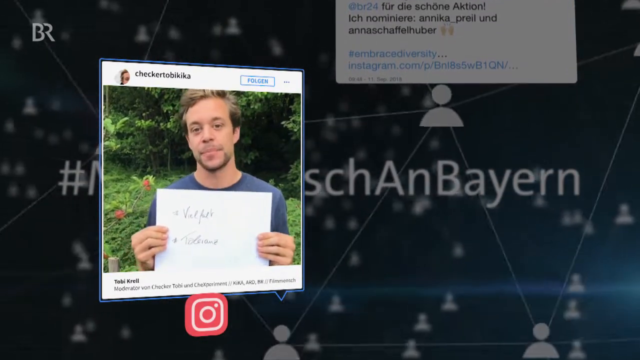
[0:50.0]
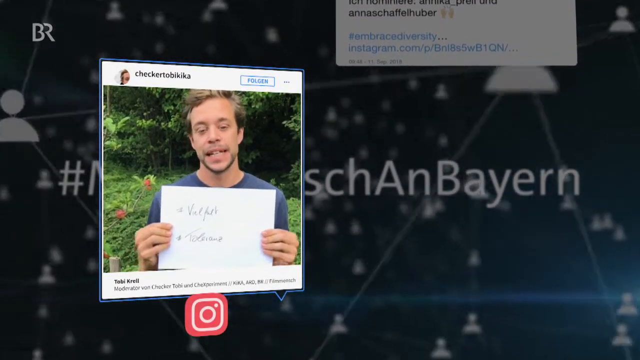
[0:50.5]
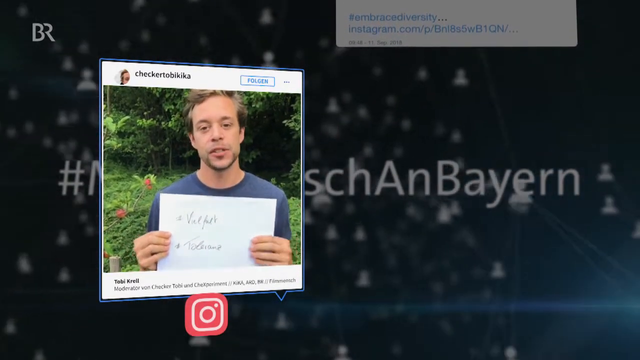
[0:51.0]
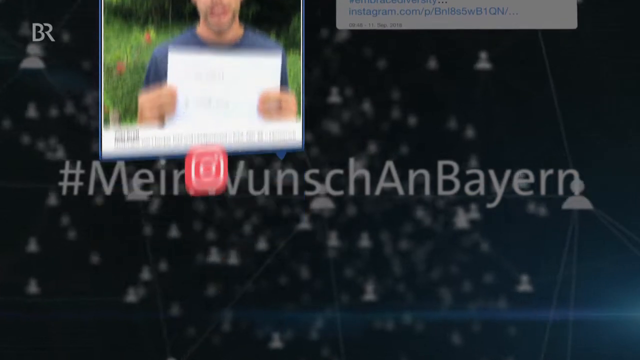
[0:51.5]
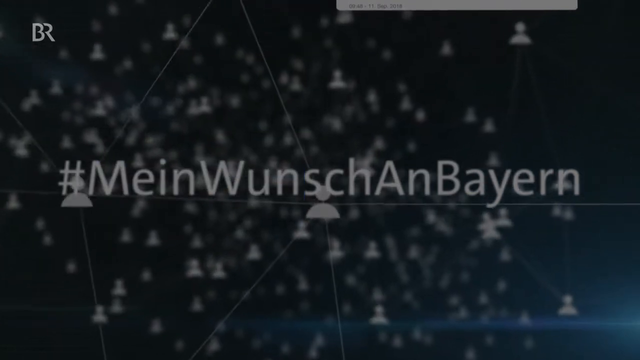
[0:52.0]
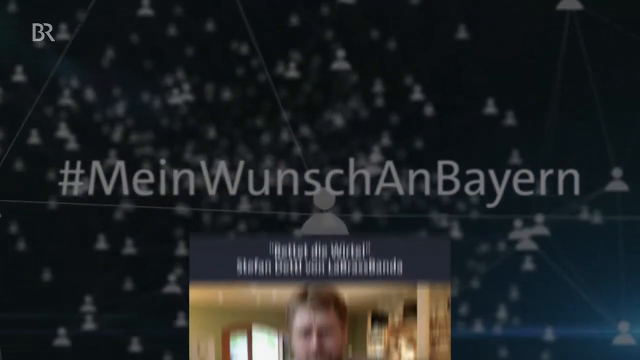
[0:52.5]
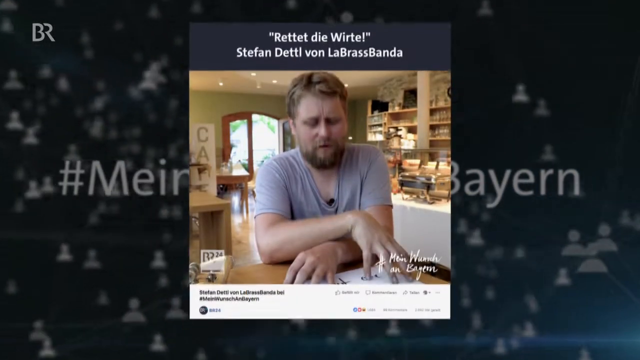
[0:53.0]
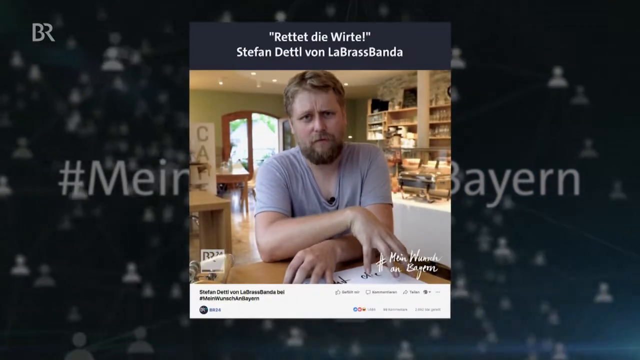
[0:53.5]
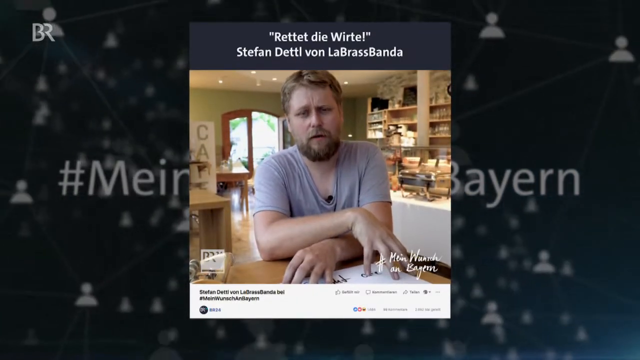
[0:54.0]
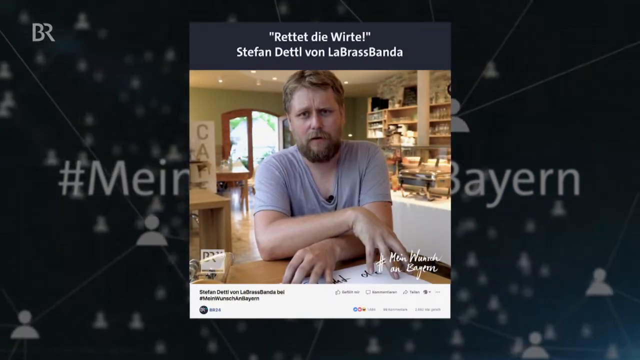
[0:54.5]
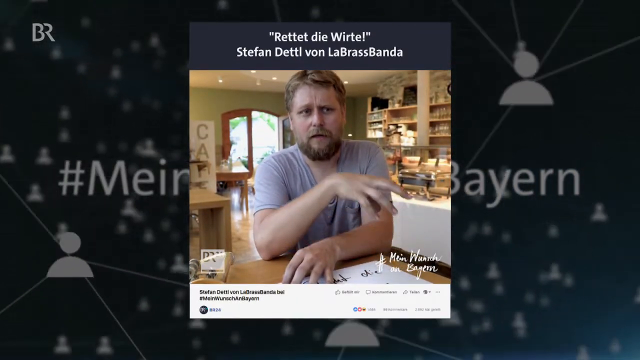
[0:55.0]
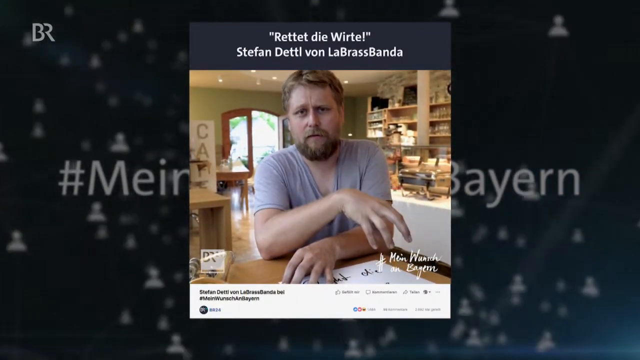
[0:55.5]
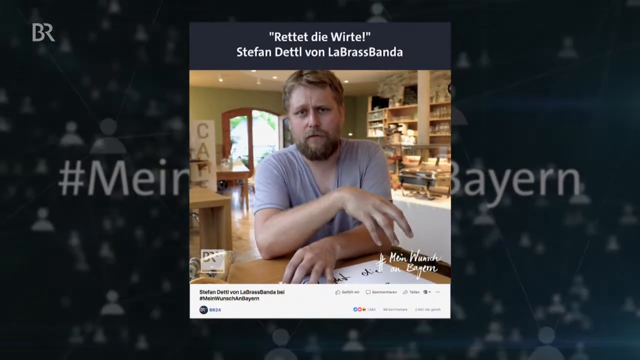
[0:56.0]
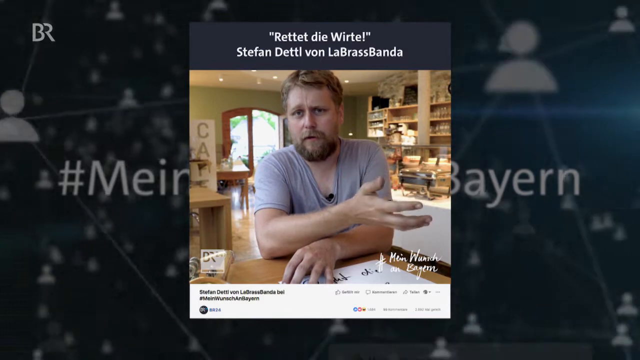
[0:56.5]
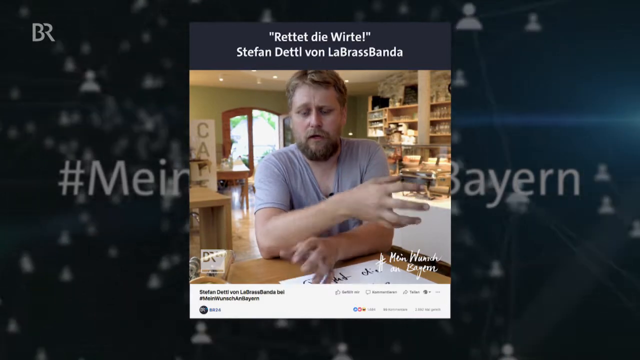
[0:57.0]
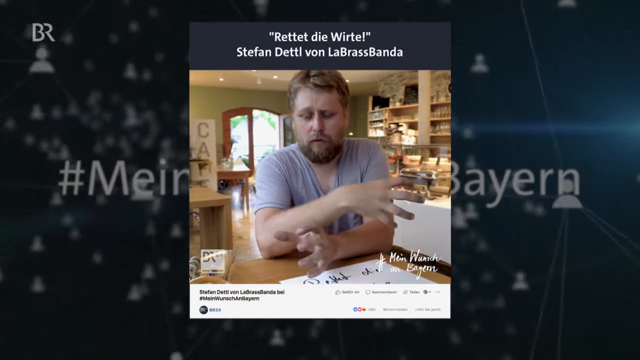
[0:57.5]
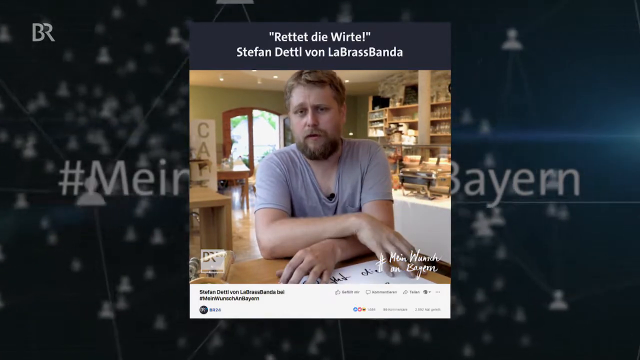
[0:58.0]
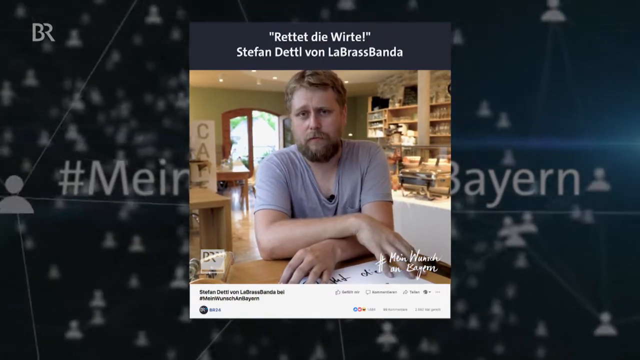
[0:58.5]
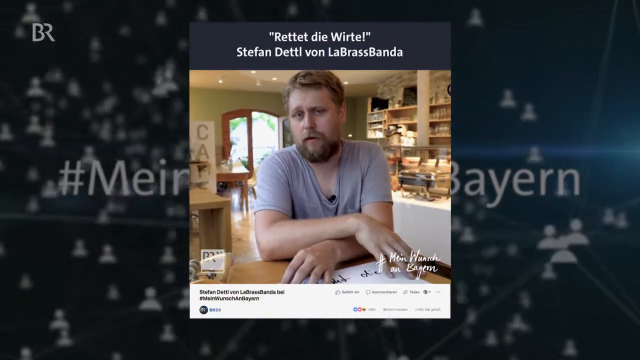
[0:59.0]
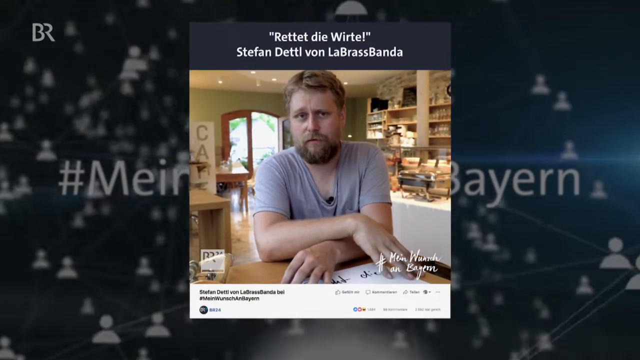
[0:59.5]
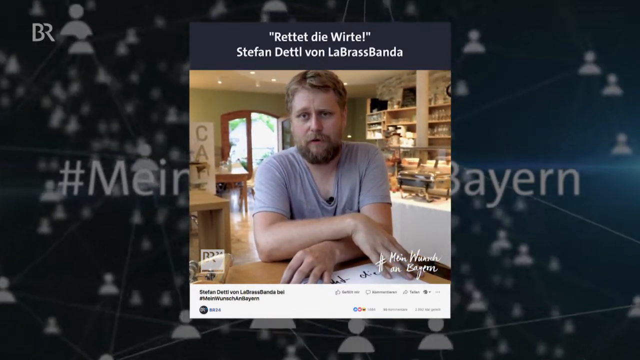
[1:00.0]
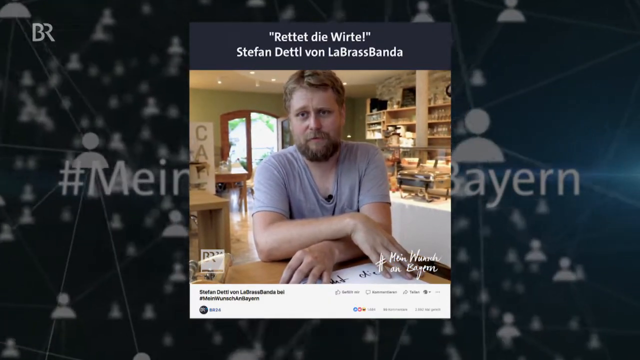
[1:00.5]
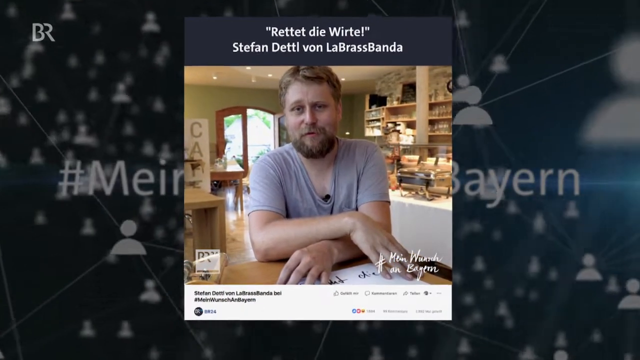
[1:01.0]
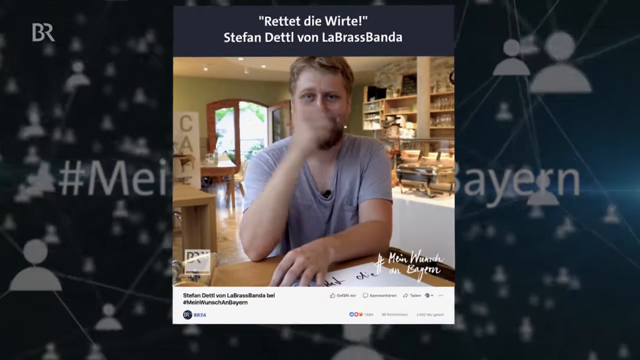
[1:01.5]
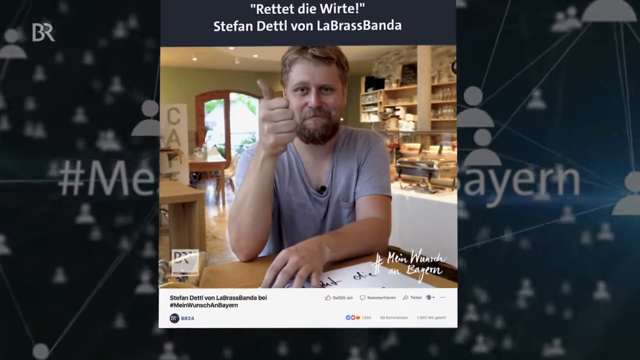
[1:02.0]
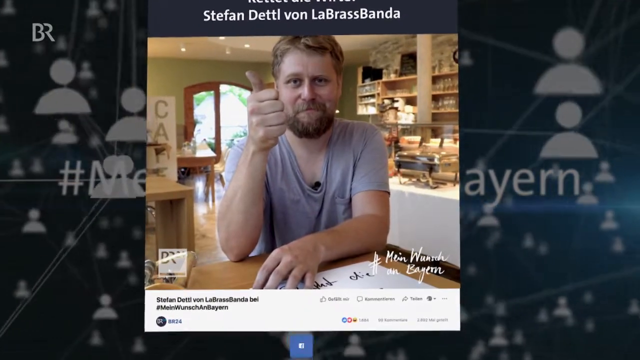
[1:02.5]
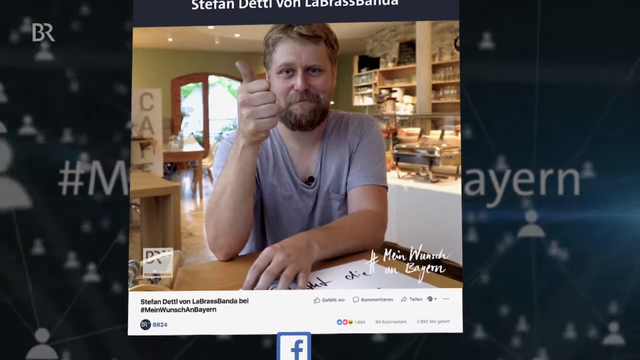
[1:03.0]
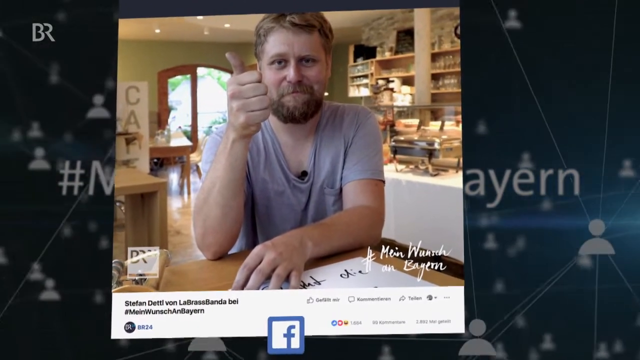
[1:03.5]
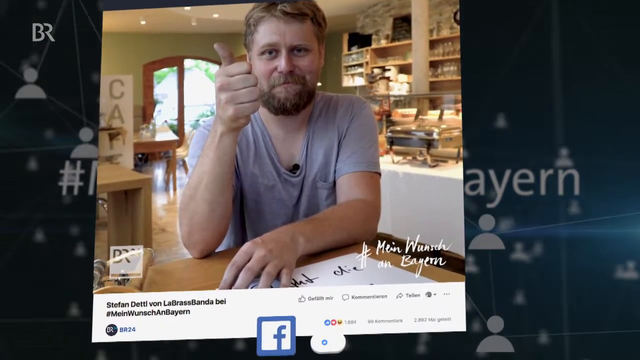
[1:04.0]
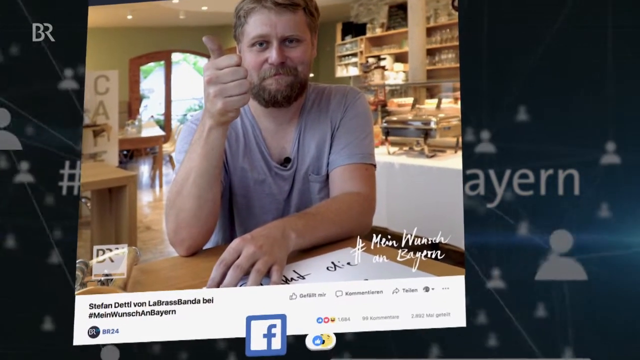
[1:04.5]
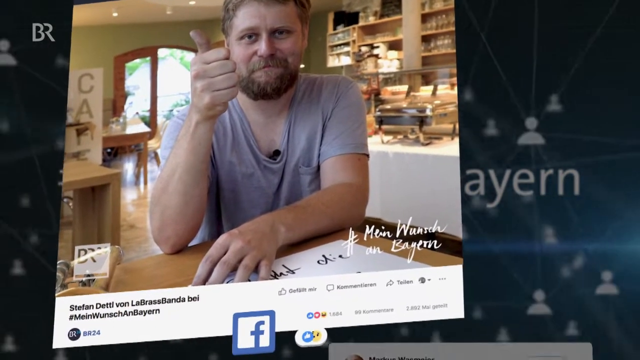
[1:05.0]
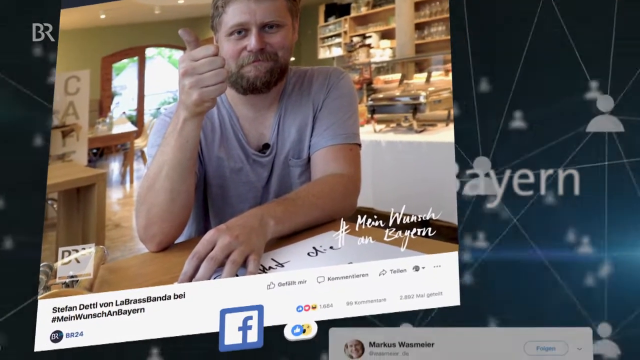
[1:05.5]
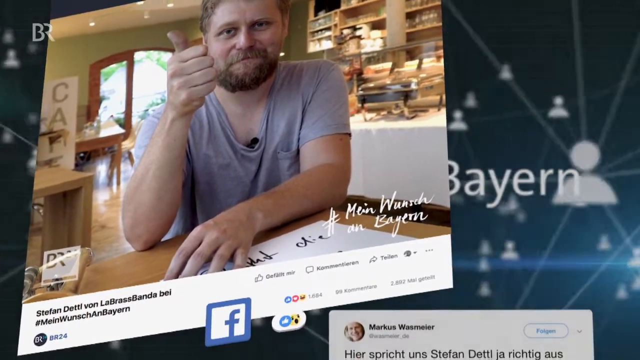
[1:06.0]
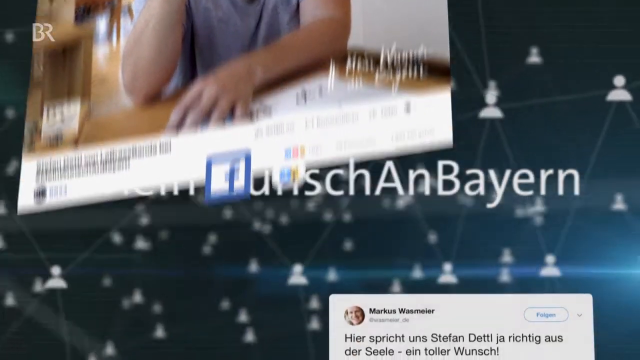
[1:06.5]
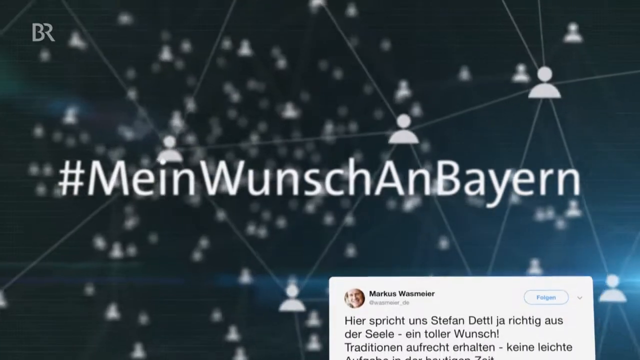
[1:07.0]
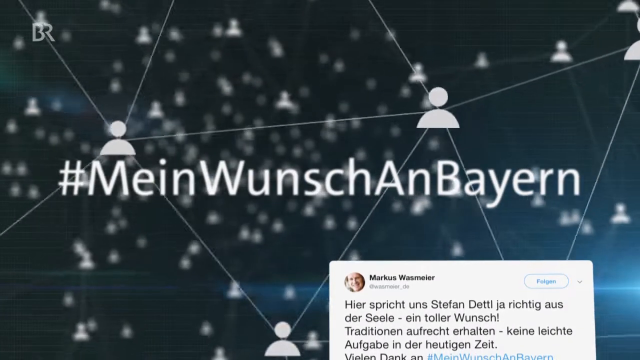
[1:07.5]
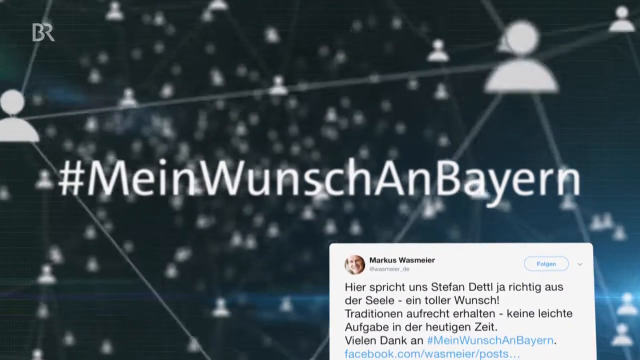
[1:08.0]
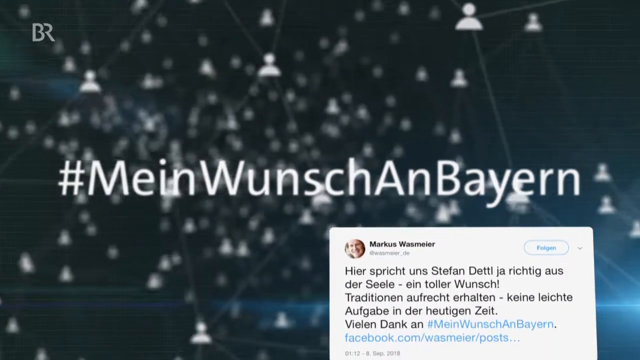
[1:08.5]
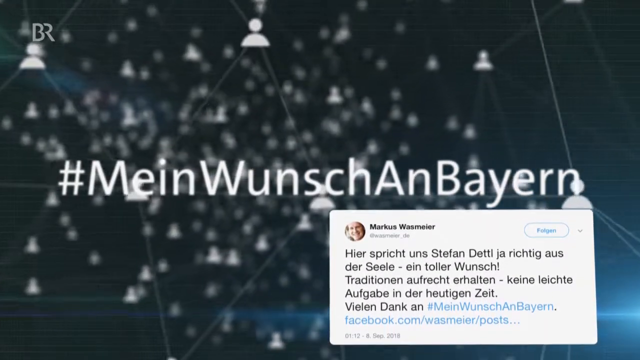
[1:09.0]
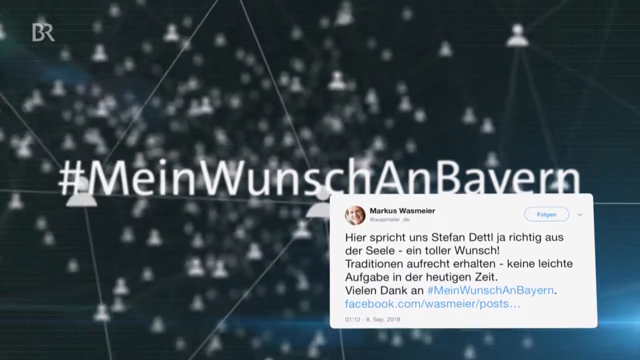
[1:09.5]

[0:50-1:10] In the background is a whole set of symbols of people with little lines connecting them. A man holds up a paper with something written in German, then disappears. Another man pops up from the bottom, with text naming him "Stefan Detti" of a brass band. He seems to be in a cafe; he has a beard and blonde hair, talks, and holds up his thumb. "Mein Wunsch an Bayern" appears.